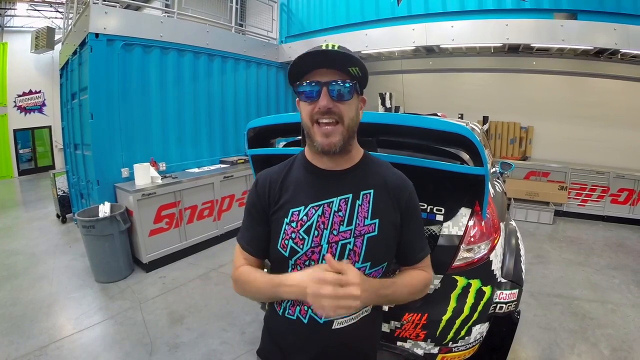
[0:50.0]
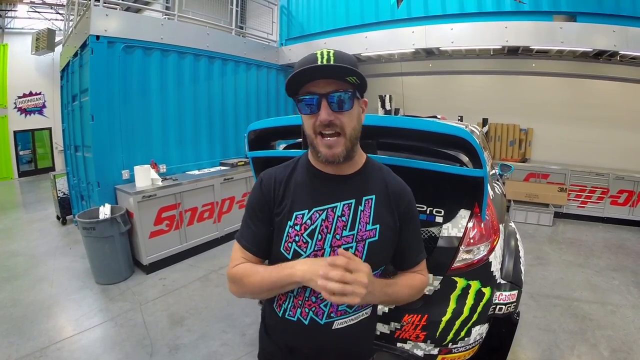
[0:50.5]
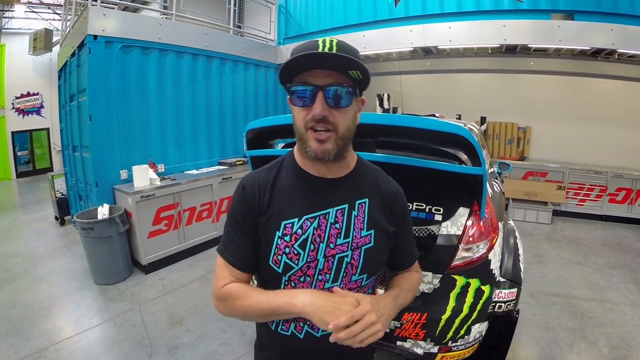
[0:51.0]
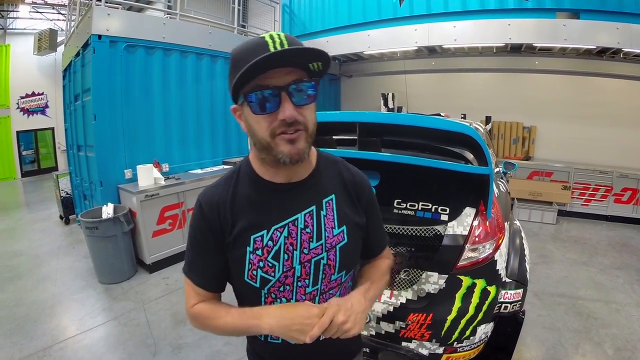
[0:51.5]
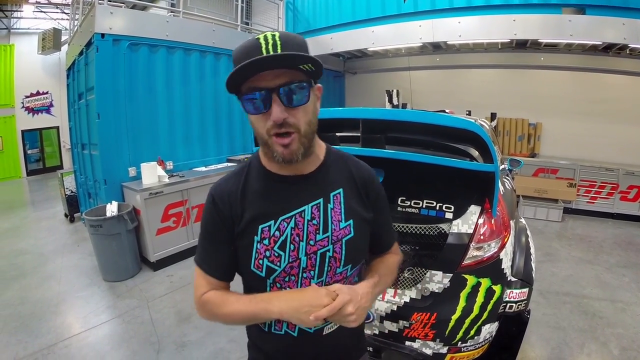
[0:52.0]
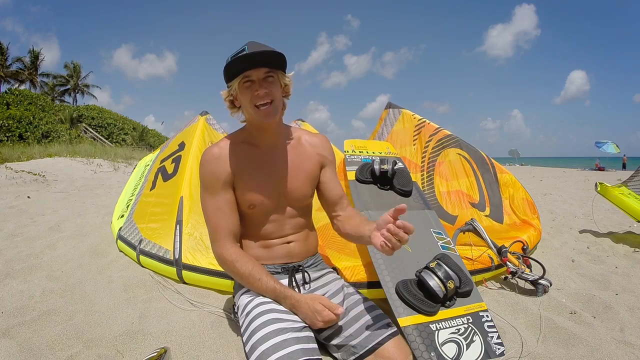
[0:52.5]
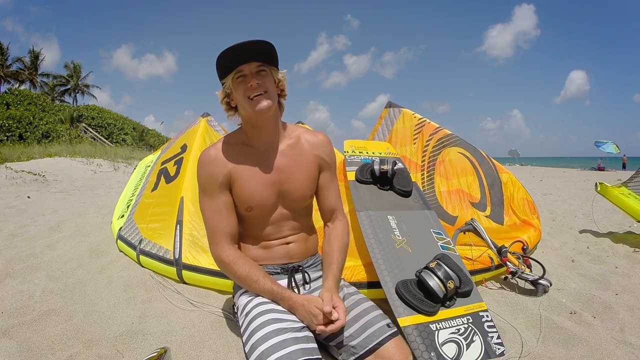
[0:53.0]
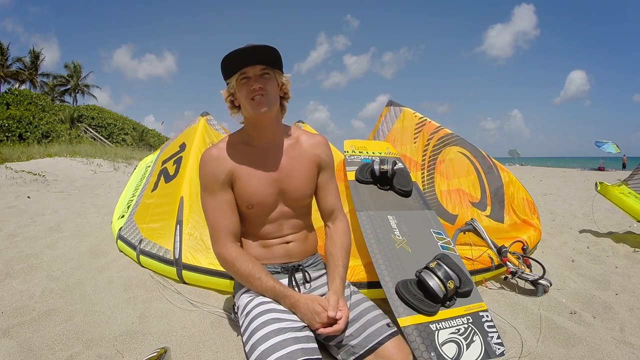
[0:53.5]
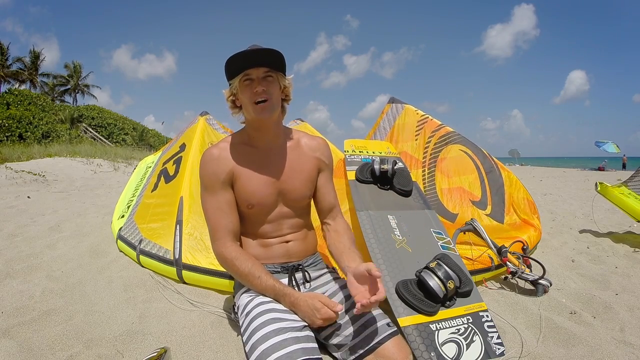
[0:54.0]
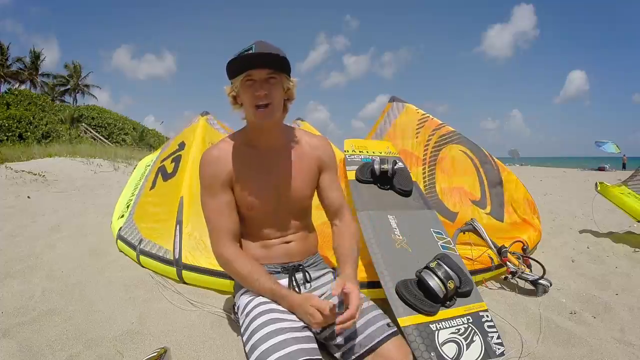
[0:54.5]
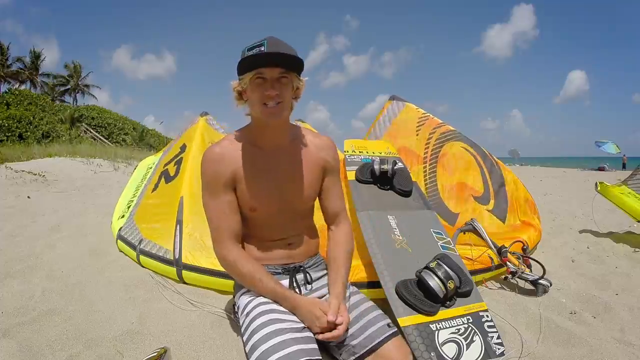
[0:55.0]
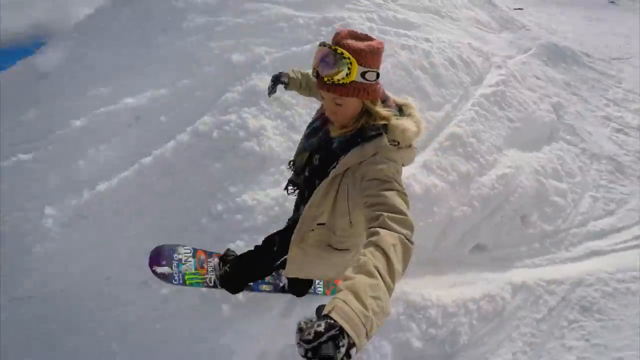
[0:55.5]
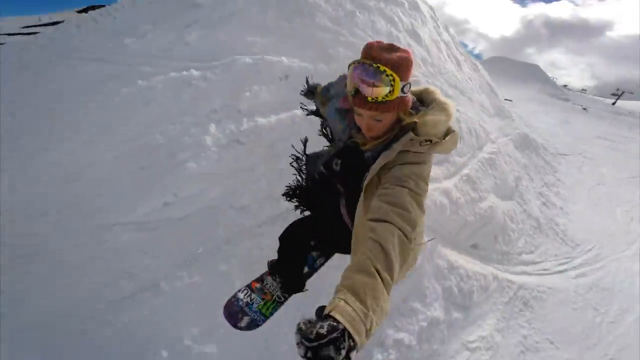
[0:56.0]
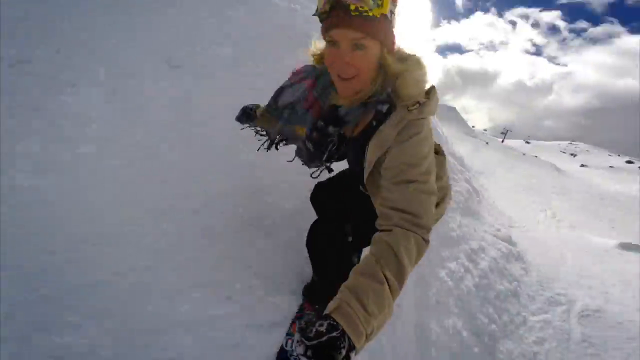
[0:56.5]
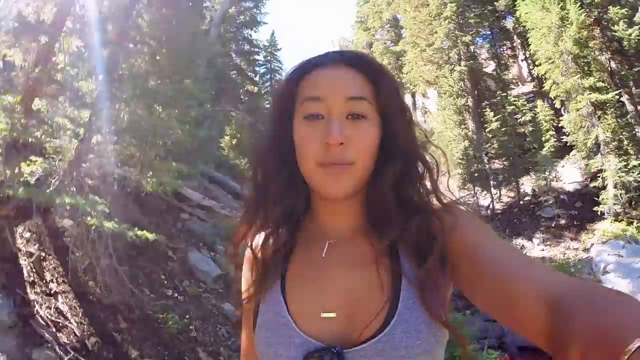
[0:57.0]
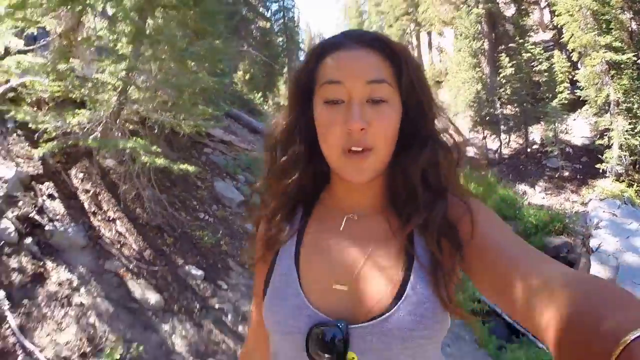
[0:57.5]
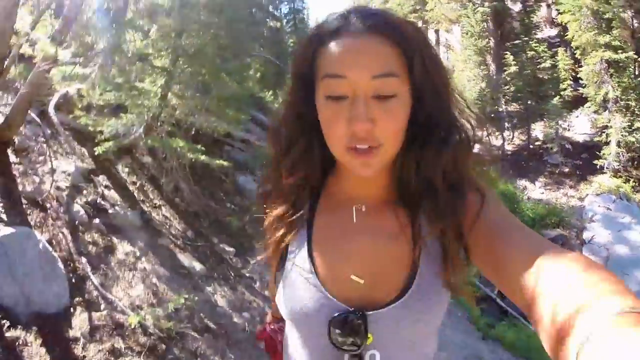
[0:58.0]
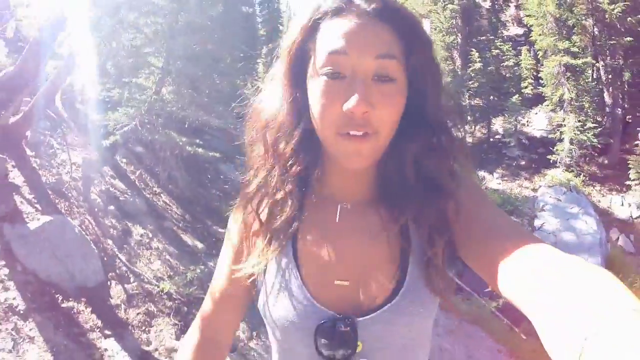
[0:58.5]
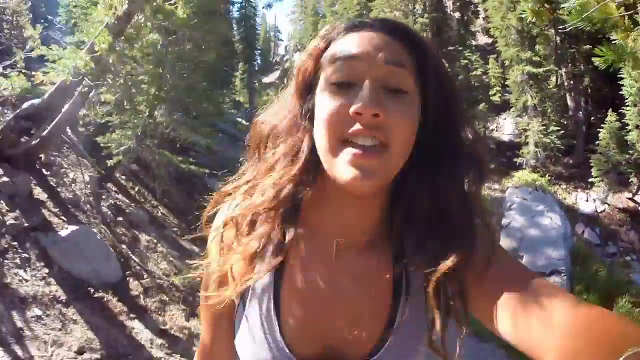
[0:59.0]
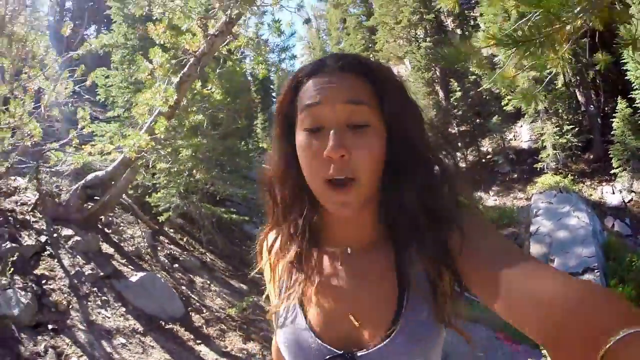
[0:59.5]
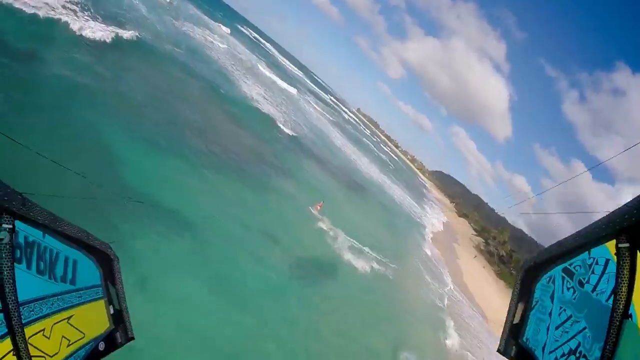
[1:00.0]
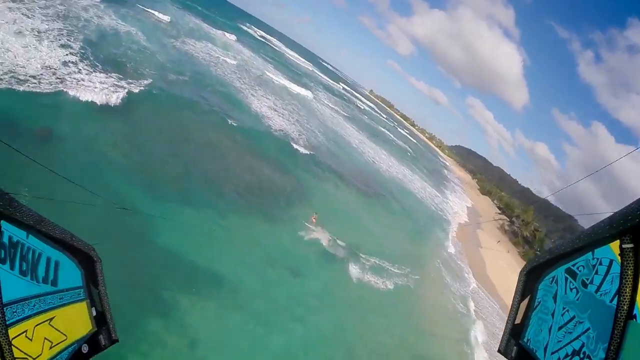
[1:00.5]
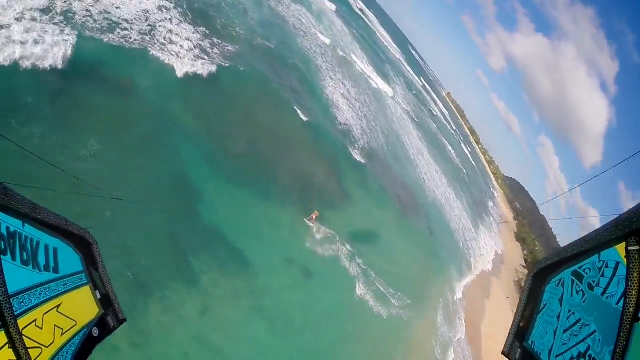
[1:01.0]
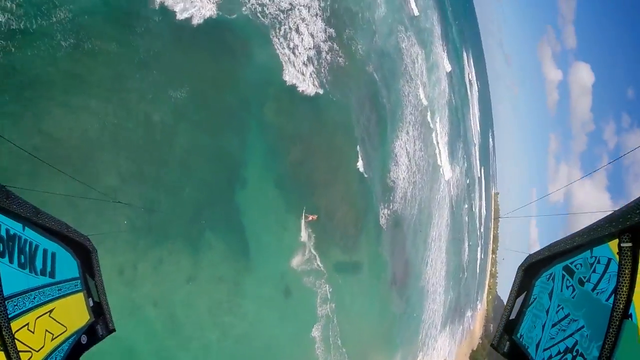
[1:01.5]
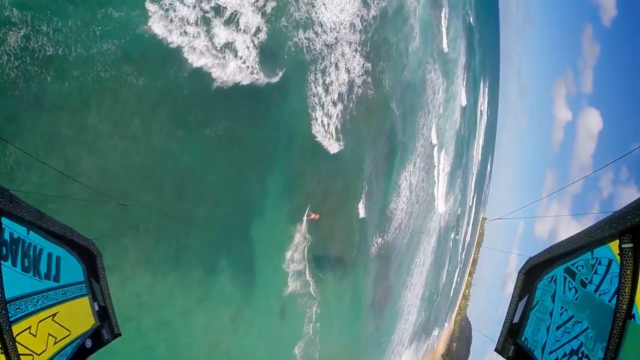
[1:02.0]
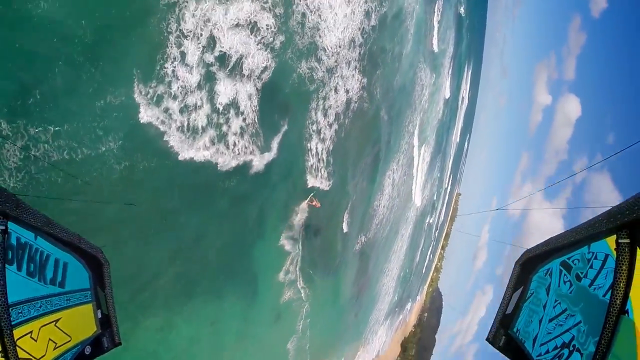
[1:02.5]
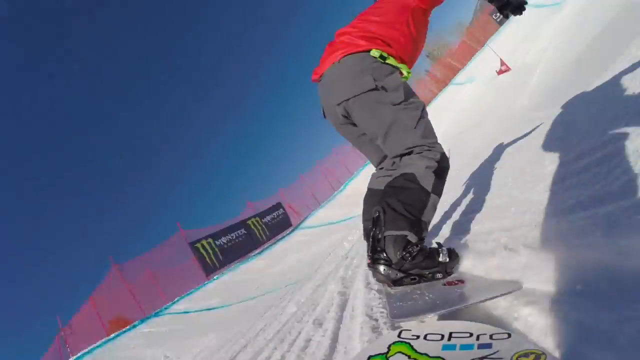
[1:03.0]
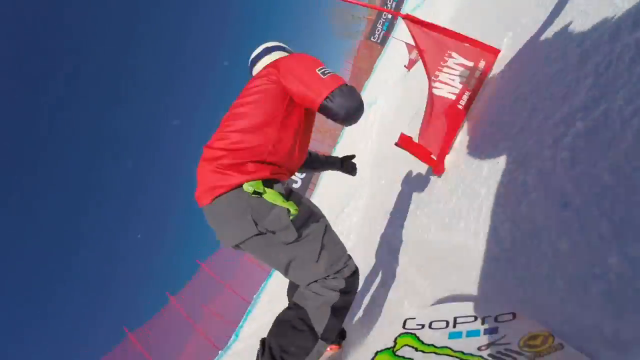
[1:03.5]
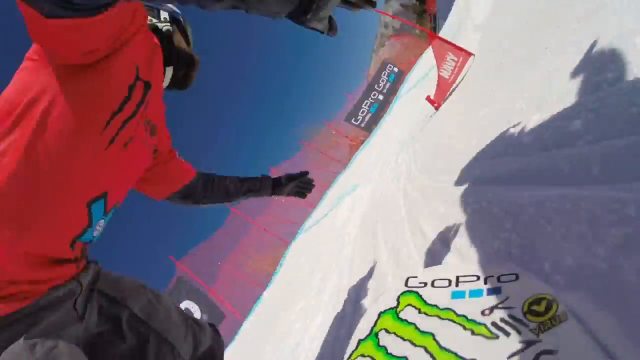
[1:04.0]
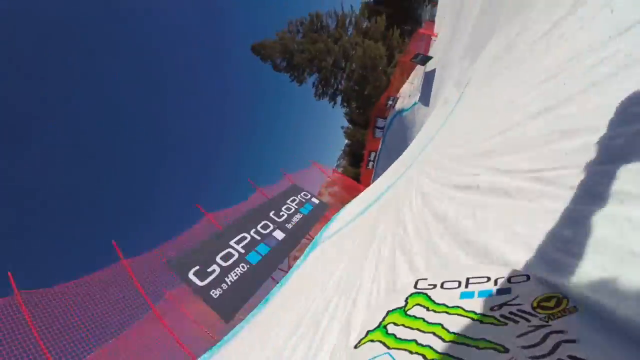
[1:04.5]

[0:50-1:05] The race car guy with the Monster hat is talking, then the beach surfer guy is talking, and the video goes through all the people, including the hiking girl. A person is paragliding on the beach. Then a shot from behind shows the person snowboarding downward, and the scene cuts off; there is a Monster logo on the snowboard.